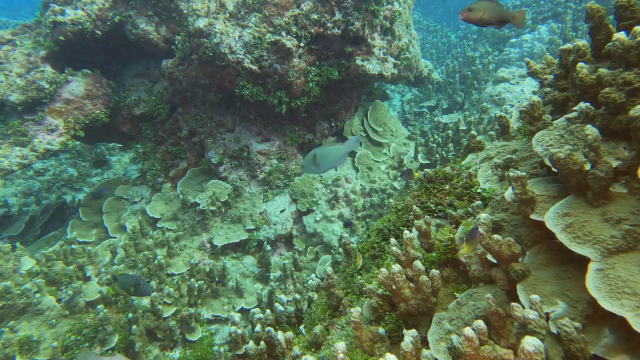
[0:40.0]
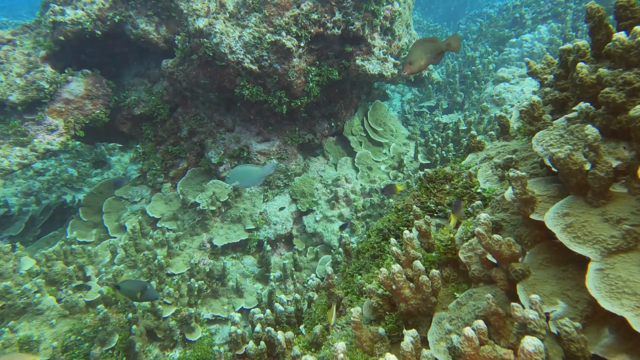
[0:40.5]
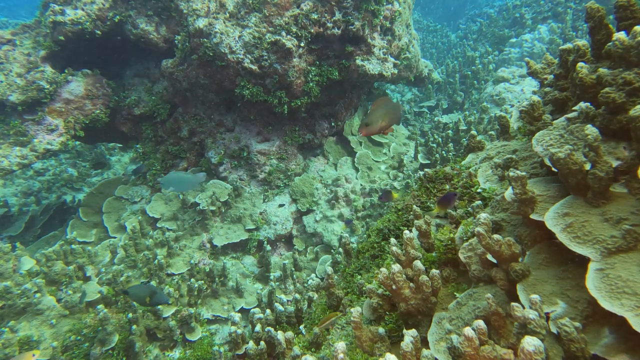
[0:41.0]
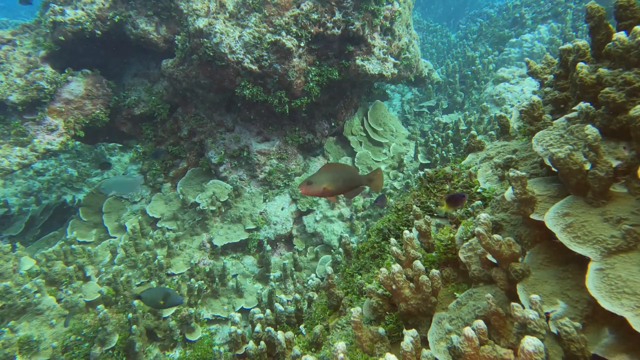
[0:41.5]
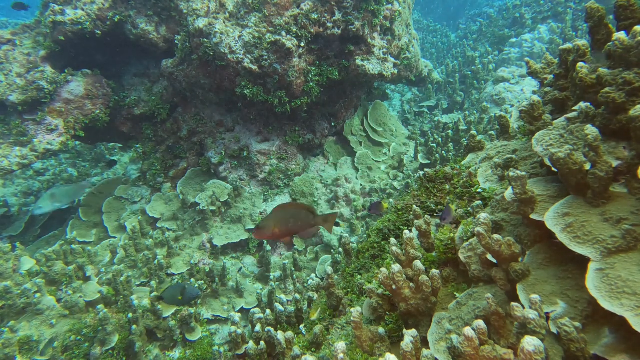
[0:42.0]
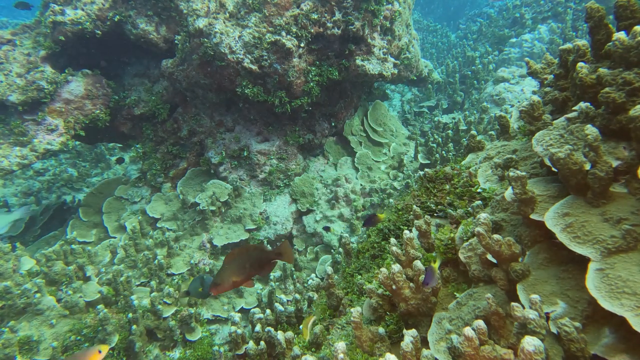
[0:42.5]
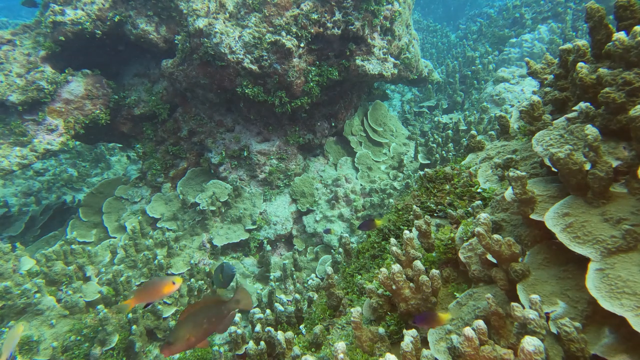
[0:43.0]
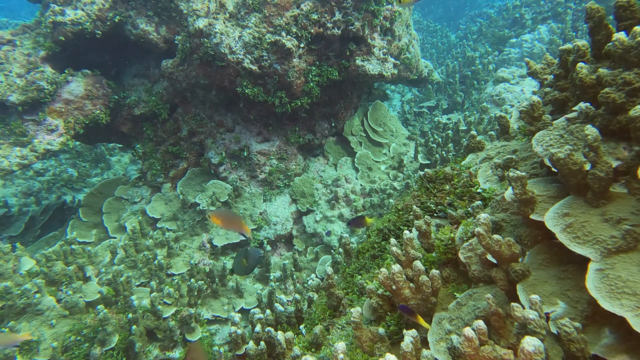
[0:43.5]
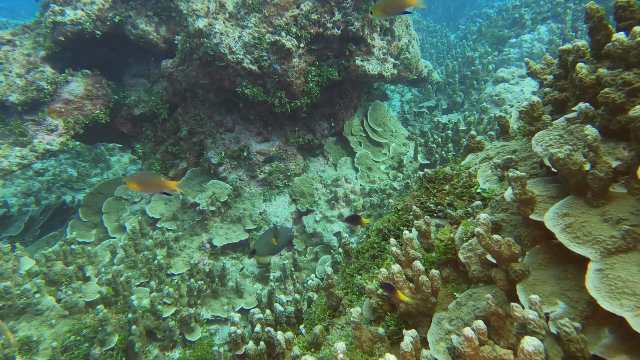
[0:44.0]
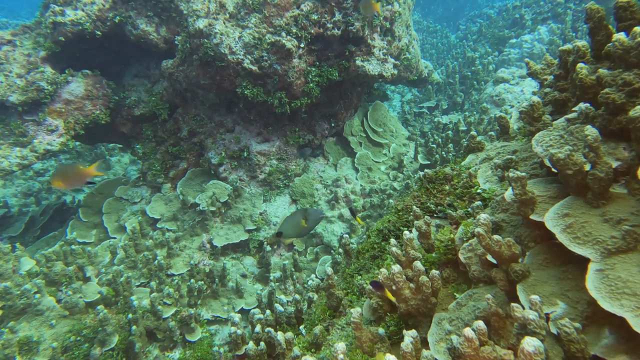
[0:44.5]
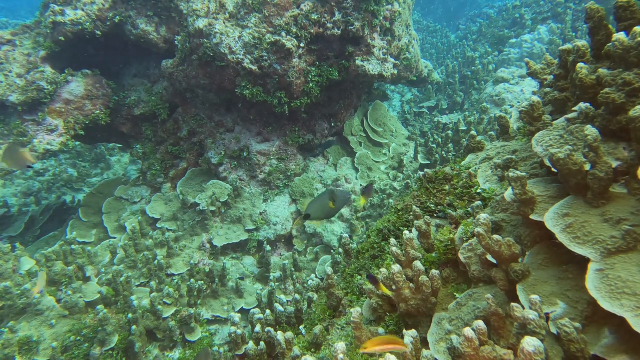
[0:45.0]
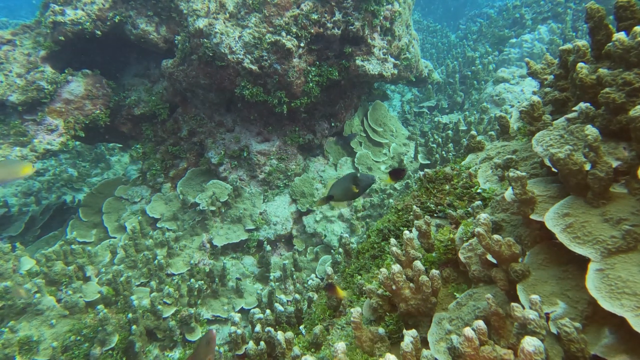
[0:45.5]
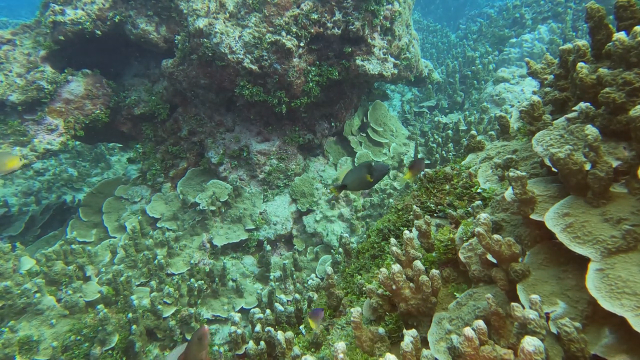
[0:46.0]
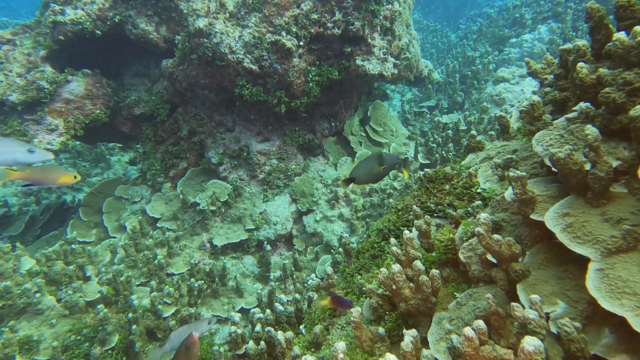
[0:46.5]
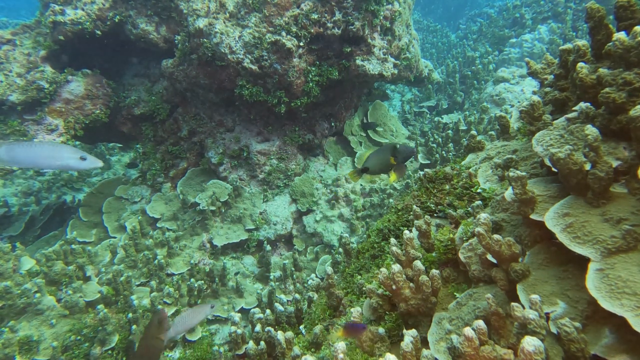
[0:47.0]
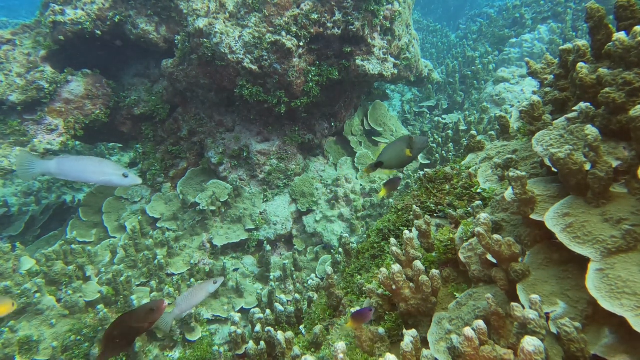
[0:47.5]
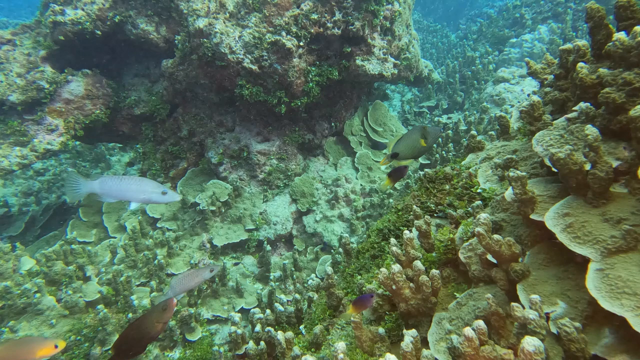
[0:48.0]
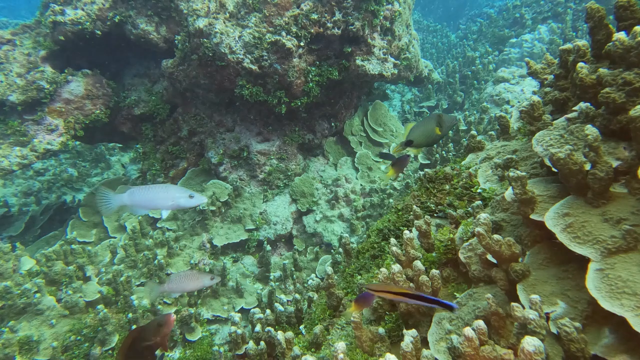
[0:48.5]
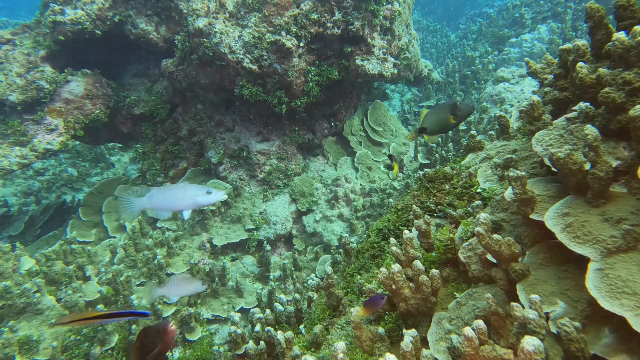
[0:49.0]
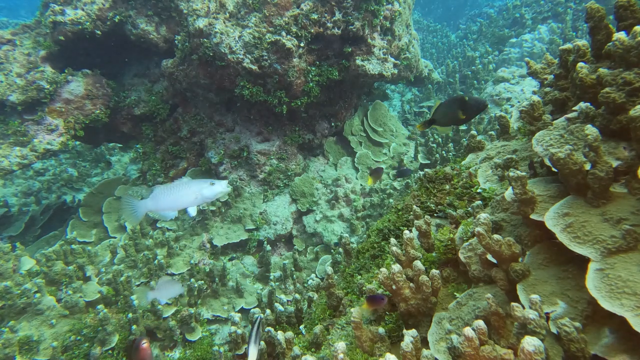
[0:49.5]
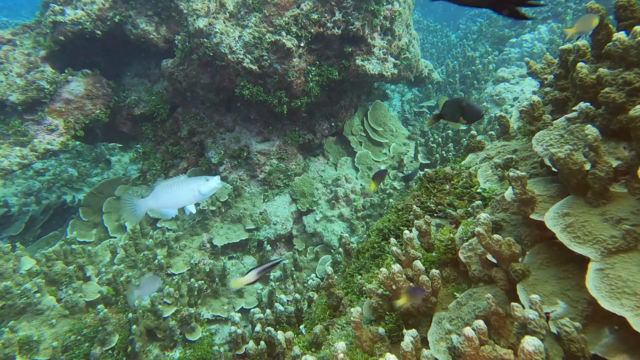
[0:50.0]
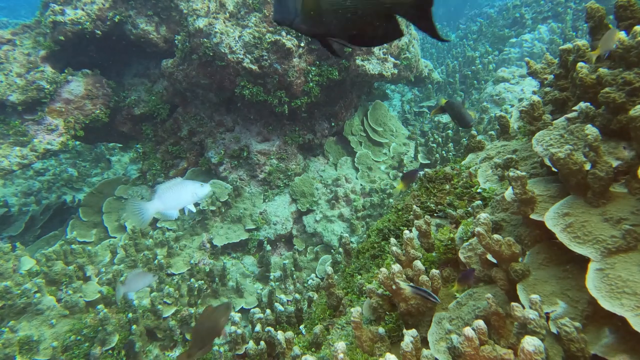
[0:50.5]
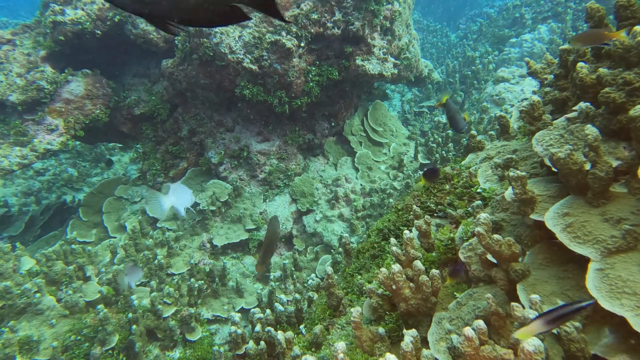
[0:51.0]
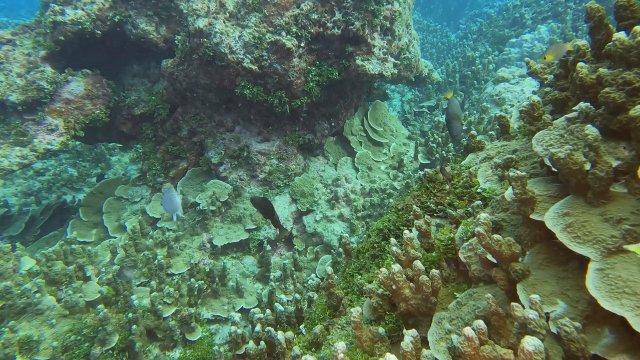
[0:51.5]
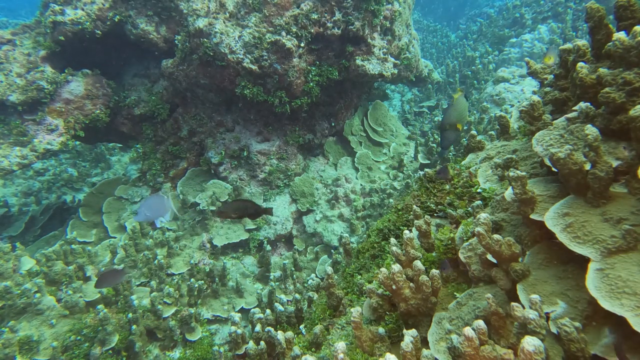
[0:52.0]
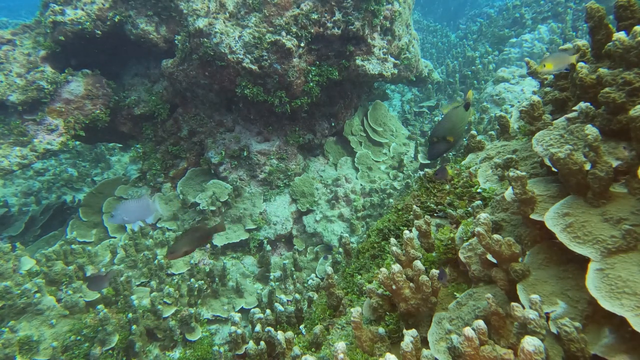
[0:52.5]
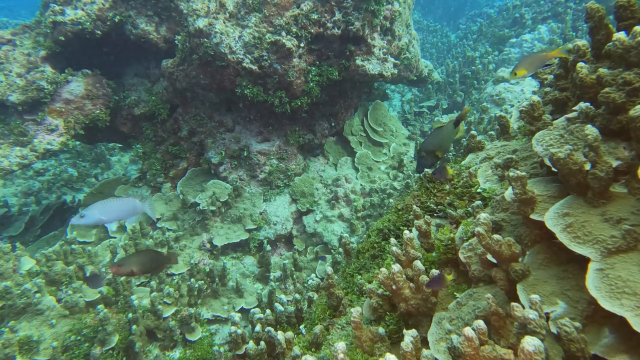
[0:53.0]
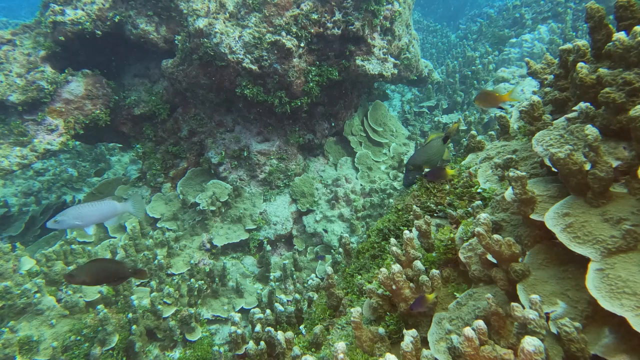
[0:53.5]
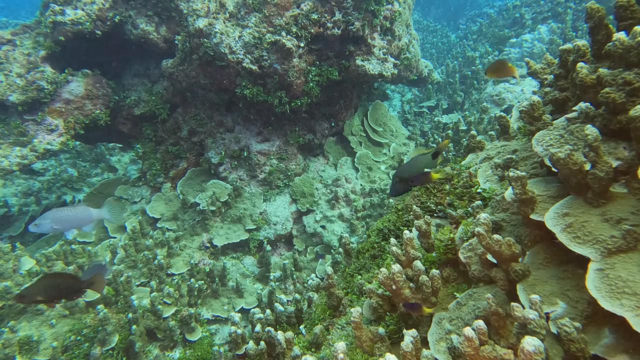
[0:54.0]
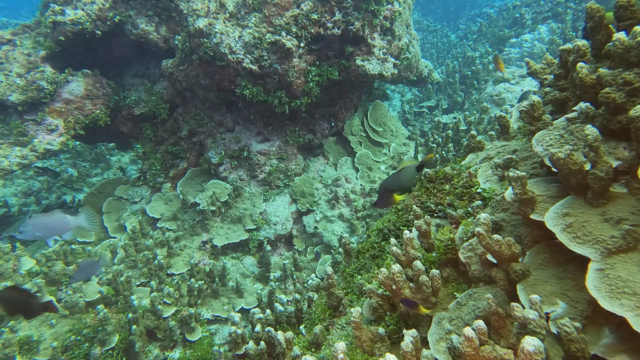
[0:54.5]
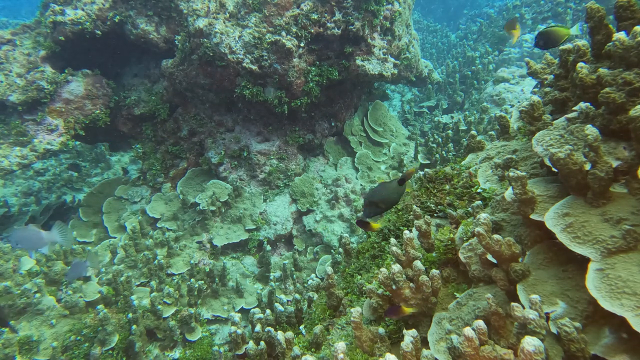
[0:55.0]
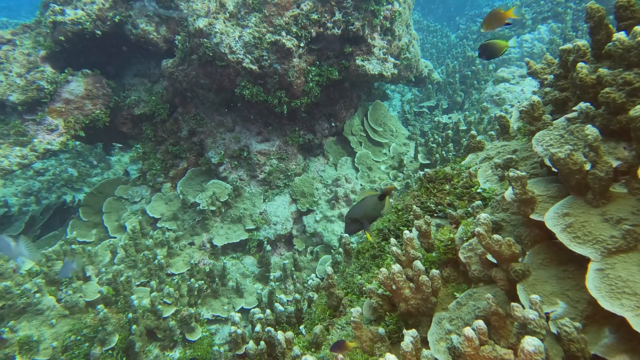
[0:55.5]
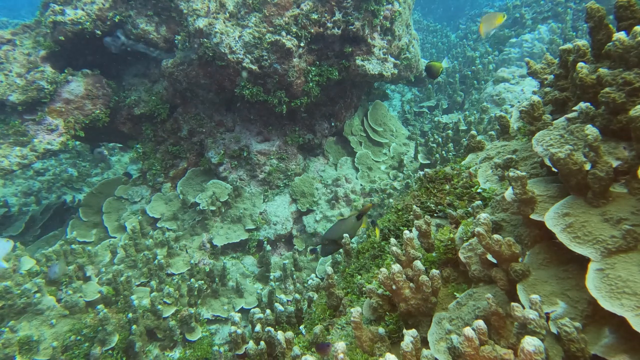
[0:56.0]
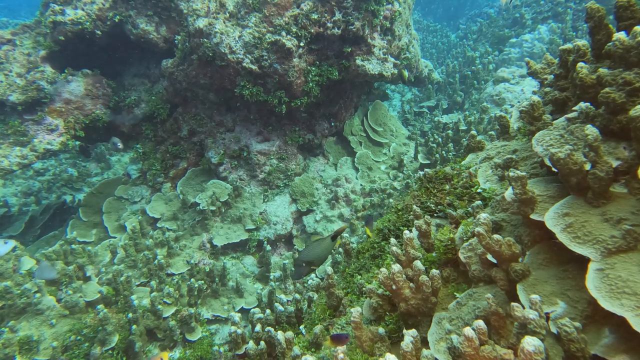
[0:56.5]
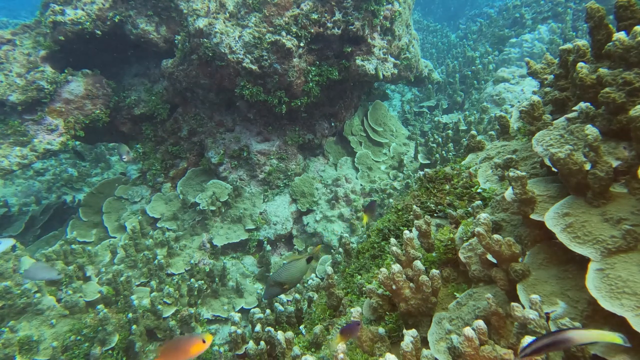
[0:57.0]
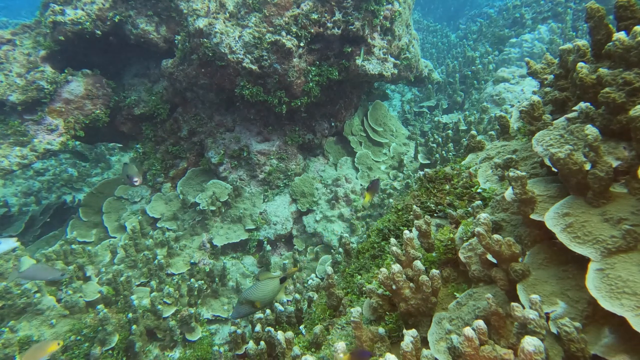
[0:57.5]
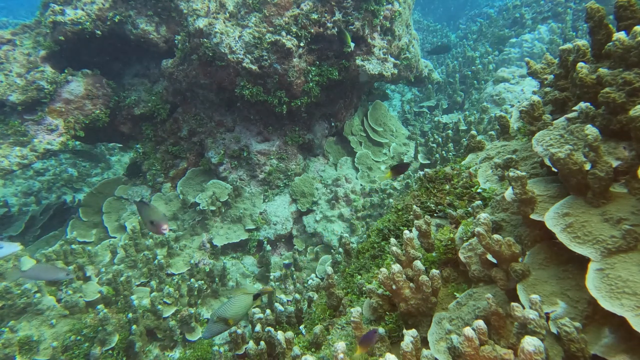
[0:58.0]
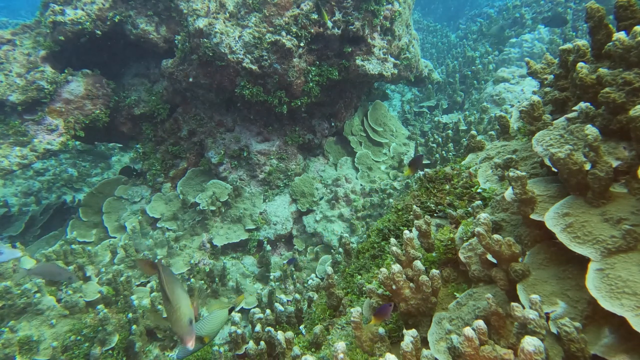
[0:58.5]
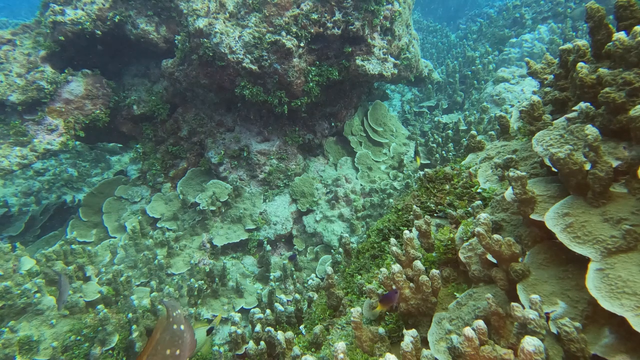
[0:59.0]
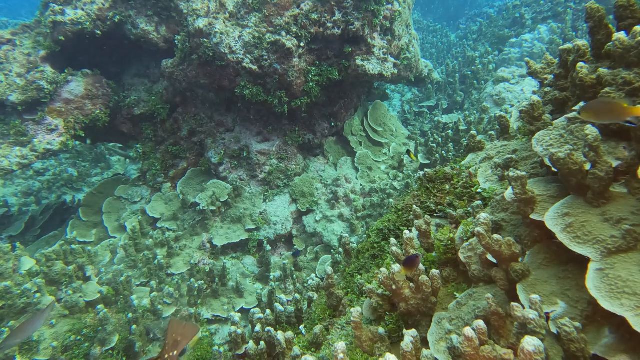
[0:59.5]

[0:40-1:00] Many different fish swim by. Throughout the shot there is an orange fish, a blue-looking fish and various multicolored small fish. Toward the background, a larger black or grayish fish is visible, appearing to be on the larger end of the fish seen so far; it swims around before disappearing from view. So many fish swim in and out of the frame that it is difficult to keep track of them; they do not linger in front of the camera but constantly move in and out of the frame as they swim around the reef.